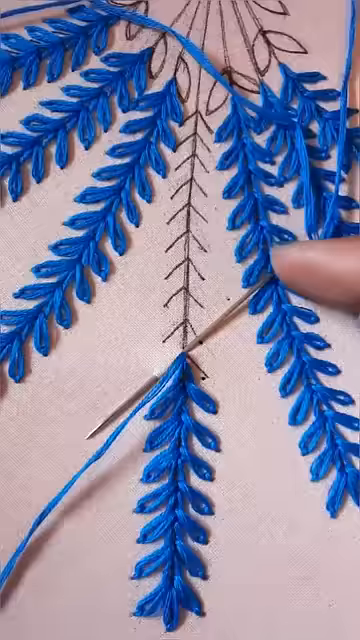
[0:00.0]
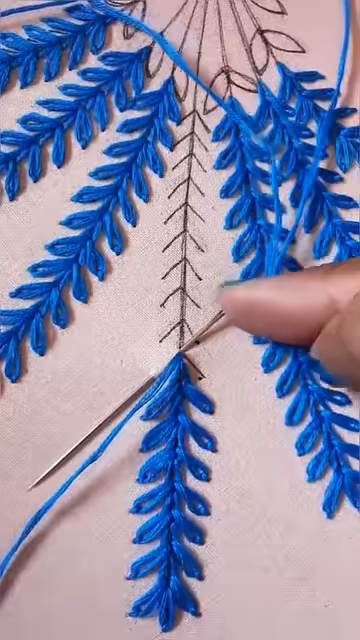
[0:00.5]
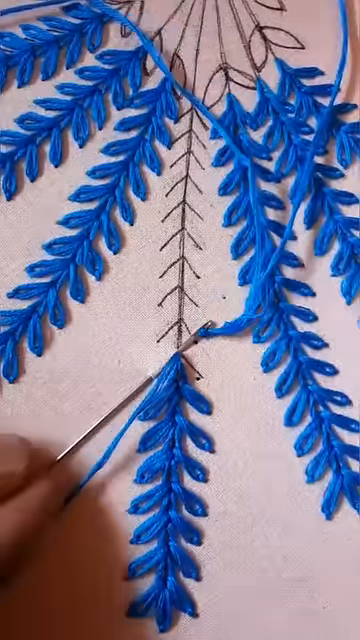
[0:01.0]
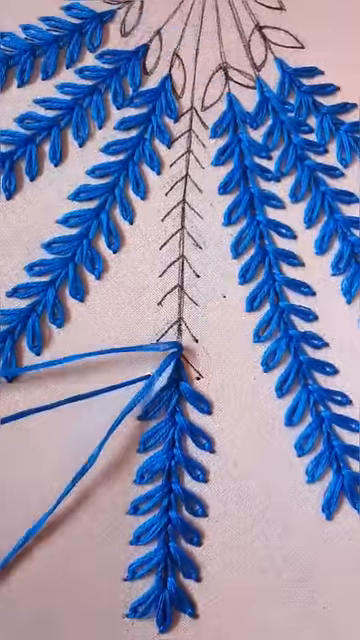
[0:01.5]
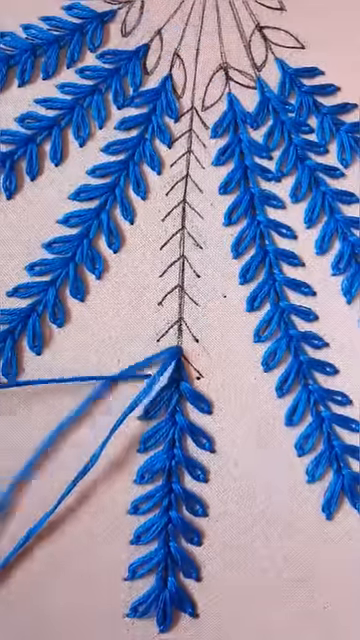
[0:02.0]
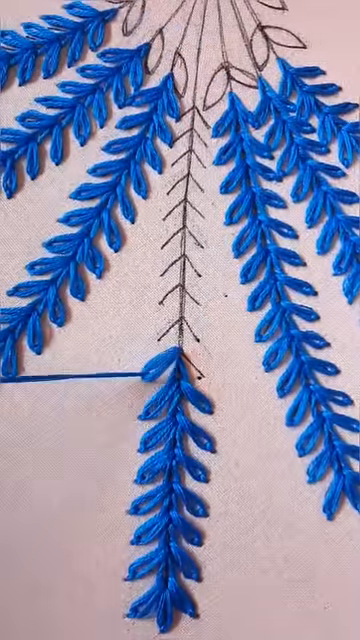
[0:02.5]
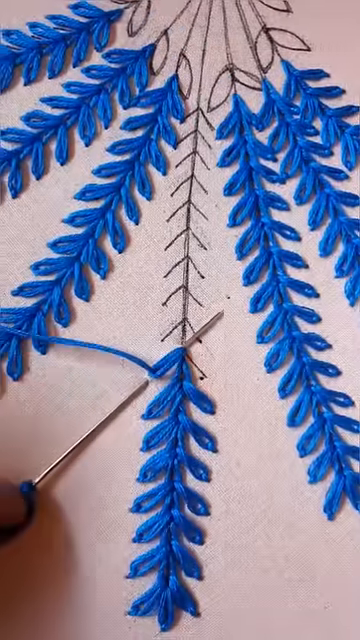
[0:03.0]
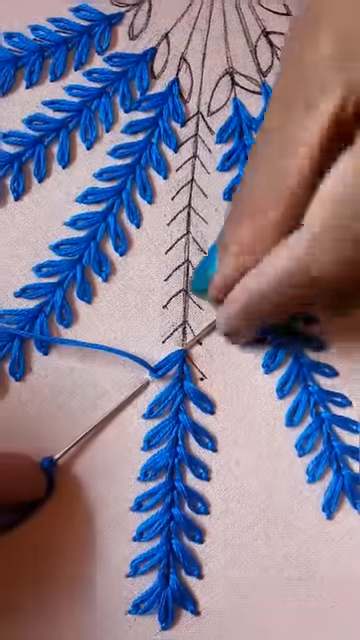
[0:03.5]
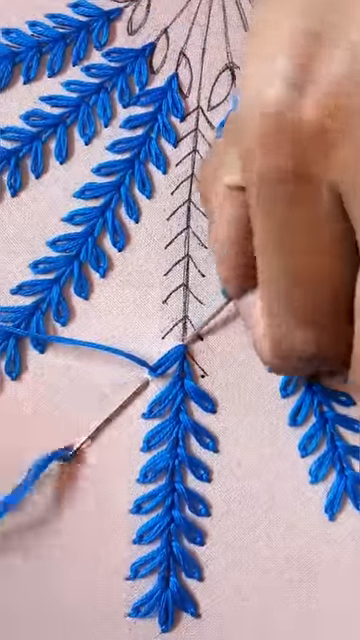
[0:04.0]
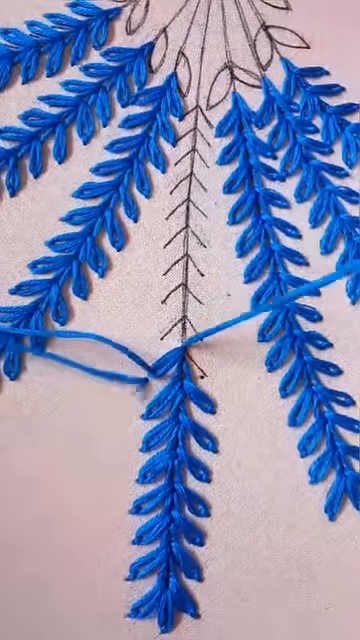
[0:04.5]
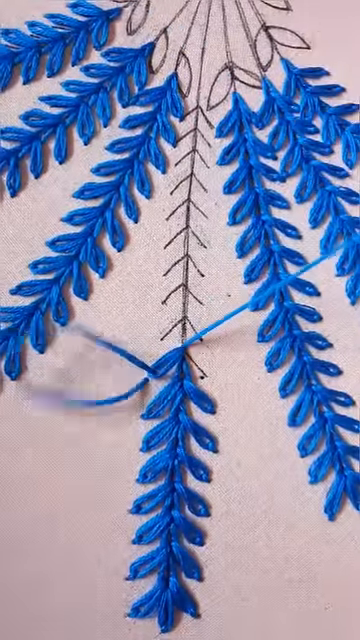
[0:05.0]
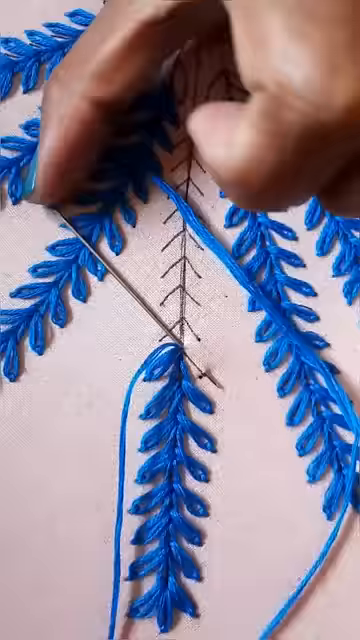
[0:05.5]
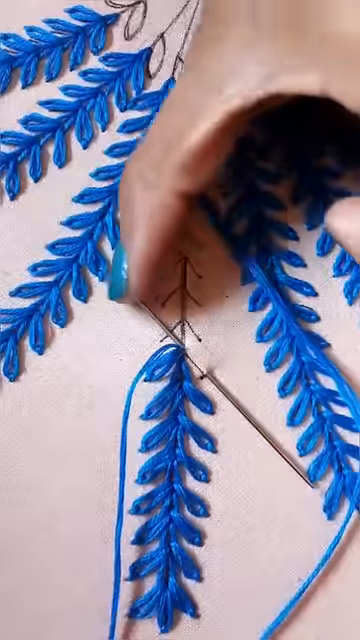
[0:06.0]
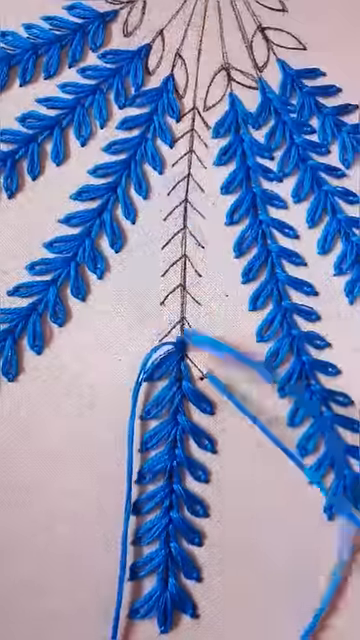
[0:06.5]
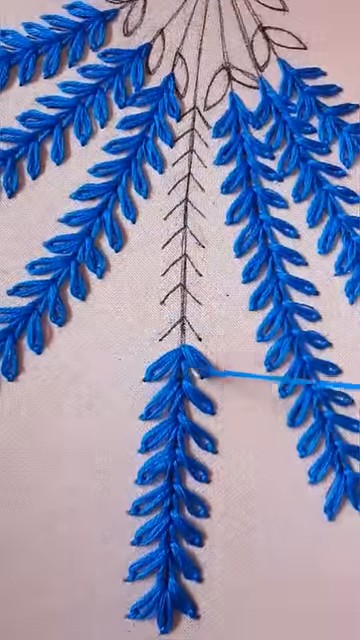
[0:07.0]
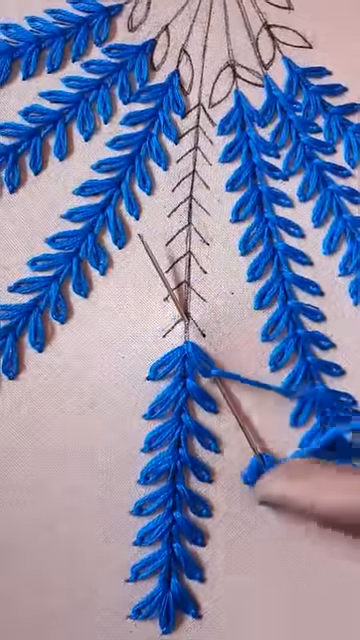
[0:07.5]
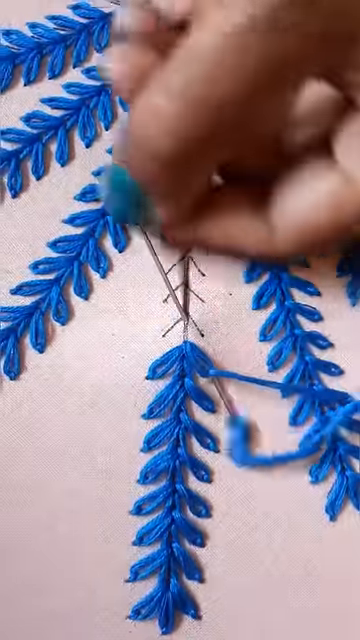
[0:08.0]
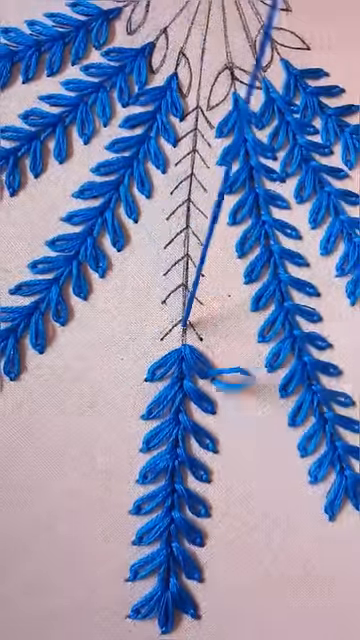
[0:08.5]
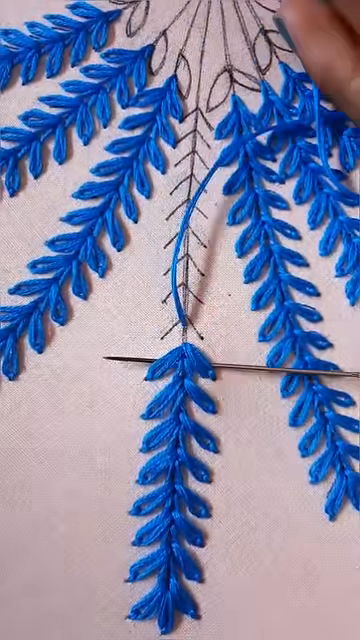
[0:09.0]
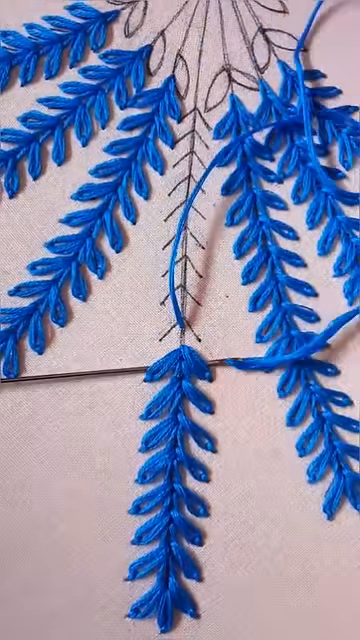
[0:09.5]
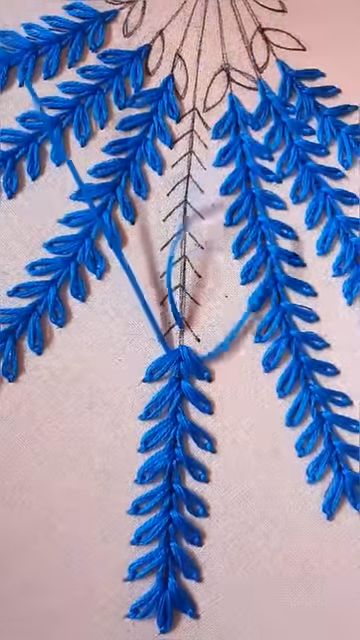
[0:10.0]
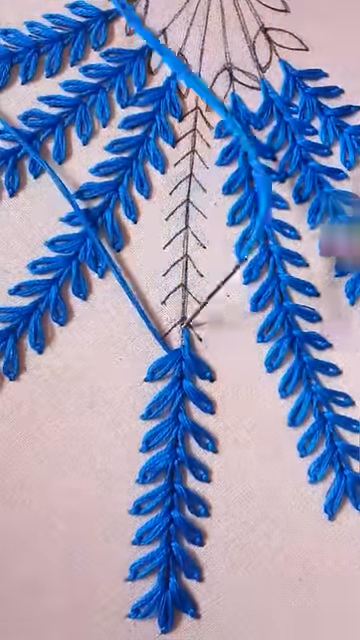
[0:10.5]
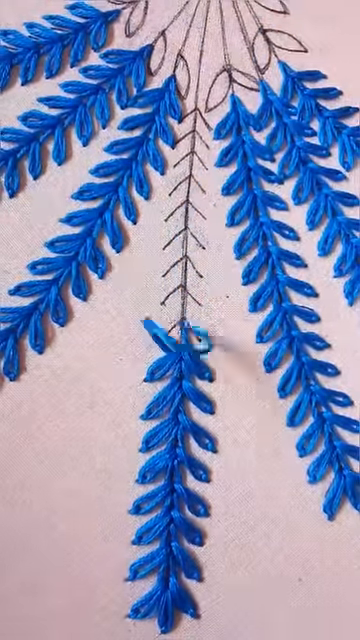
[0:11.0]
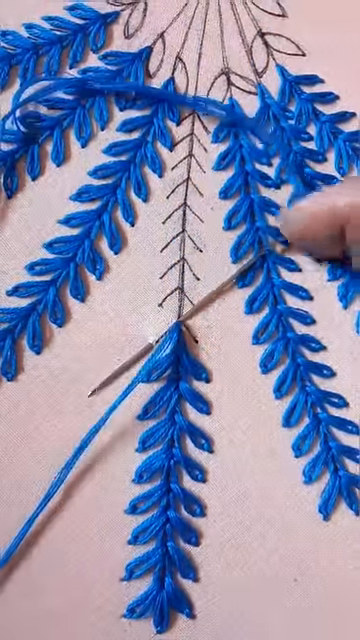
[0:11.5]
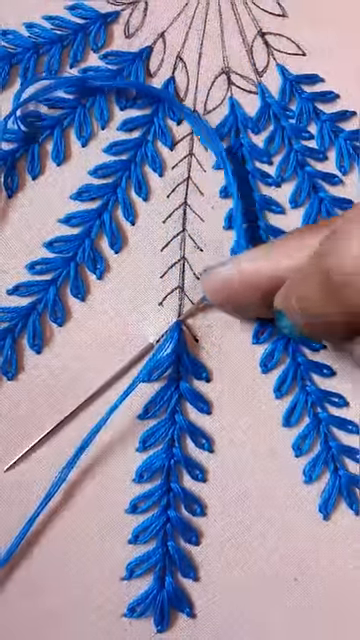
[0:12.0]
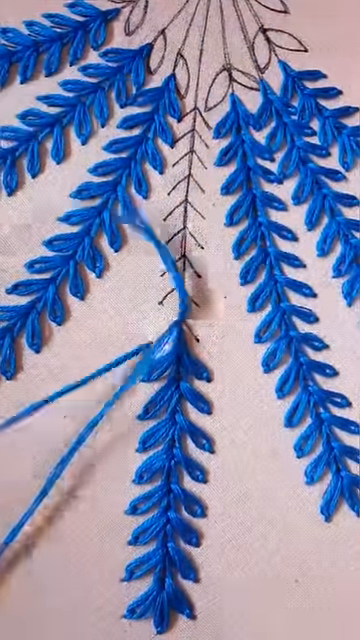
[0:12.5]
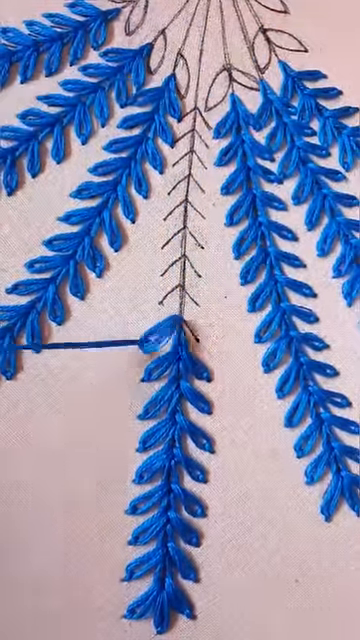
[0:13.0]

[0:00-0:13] Someone is doing cross stitch with blue thread. The pattern already has elements in sizes small, medium, large, then an extra large one in the center, followed by the reverse order: large, medium, small. It almost looks like they may be making a bouquet that is hanging down. Using a needle with blue thread, they cross stitch the stems of a plant with leaves that are hanging down. The hand doing the needlework is a woman's, and her fingernail polish is a turquoise-blue color that looks very close to the electric bluish color of the thread she is using for the cross-stitch portion of the picture, with the thread going through. The upper leaves appear not to have been done yet; currently she is only working on the blue, corn silk-looking leaves.